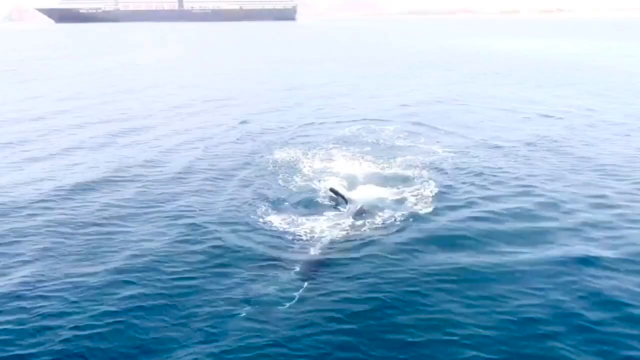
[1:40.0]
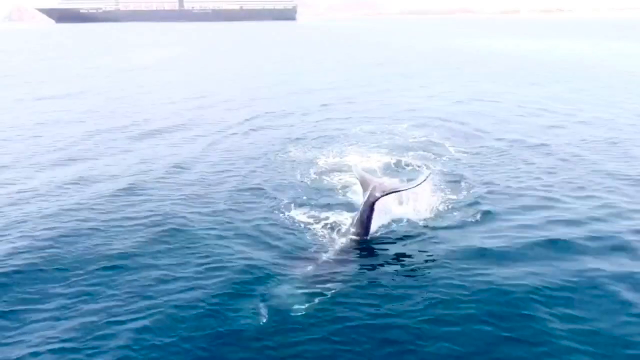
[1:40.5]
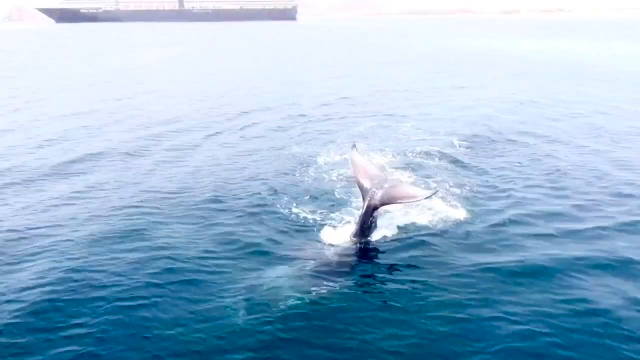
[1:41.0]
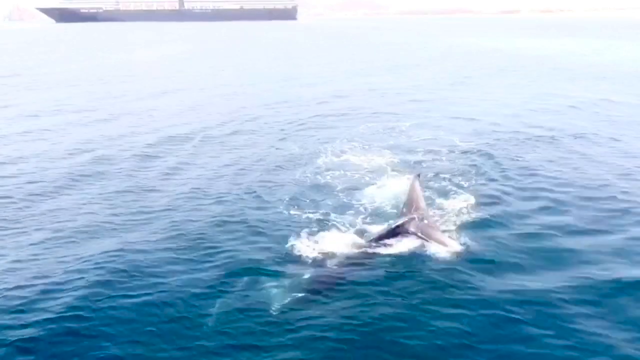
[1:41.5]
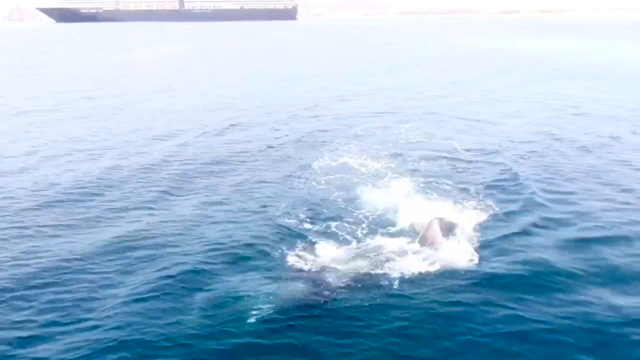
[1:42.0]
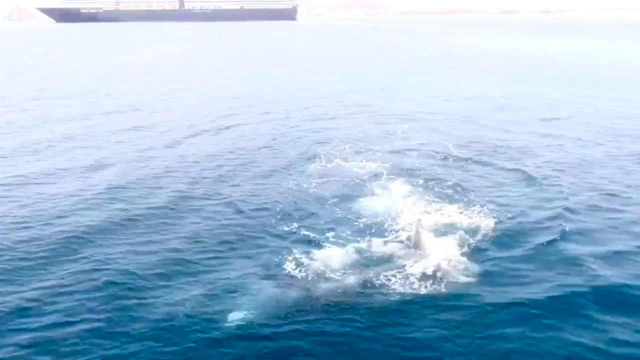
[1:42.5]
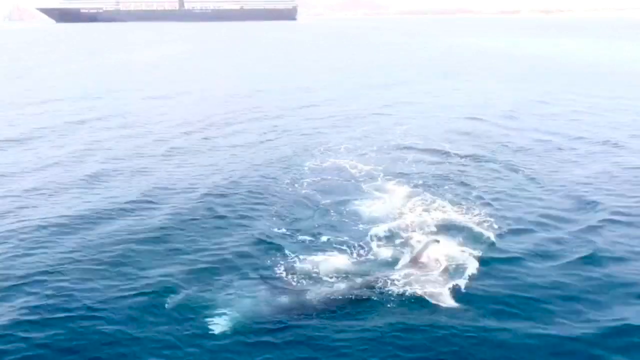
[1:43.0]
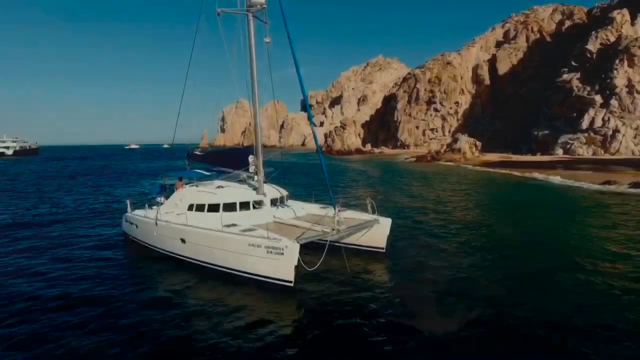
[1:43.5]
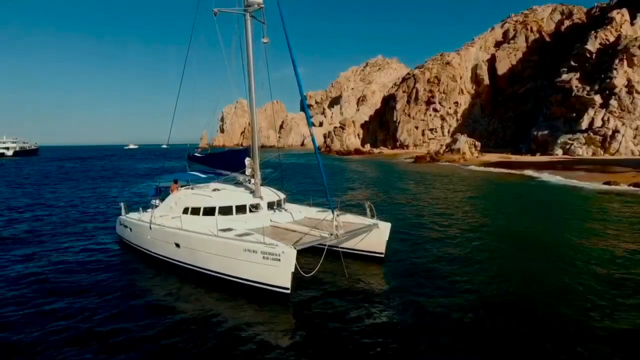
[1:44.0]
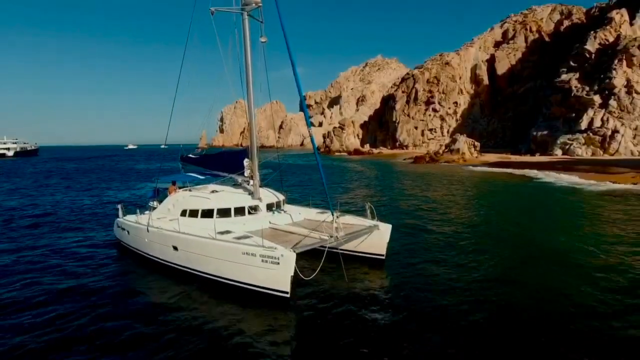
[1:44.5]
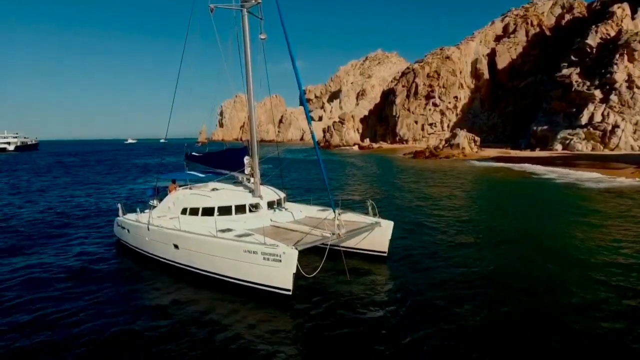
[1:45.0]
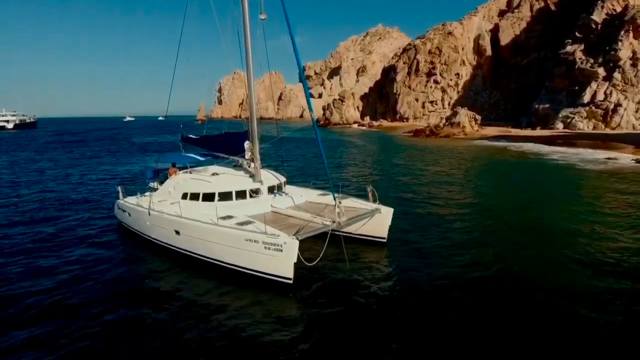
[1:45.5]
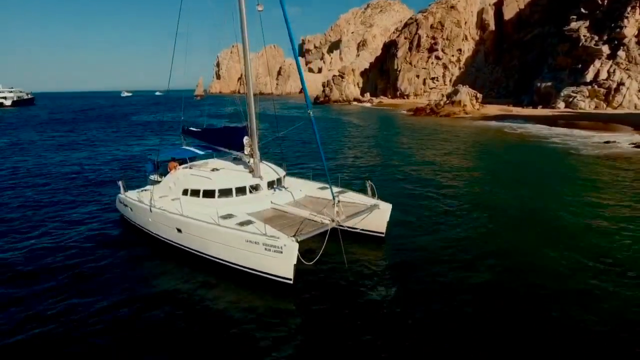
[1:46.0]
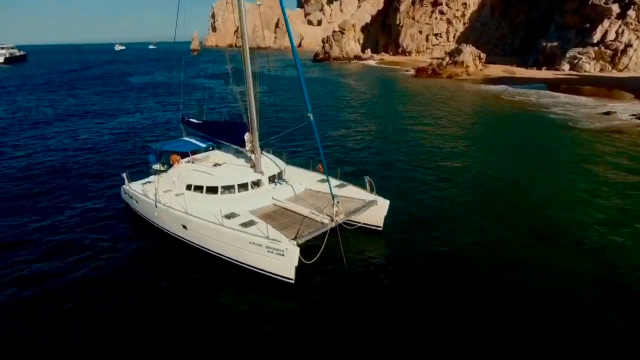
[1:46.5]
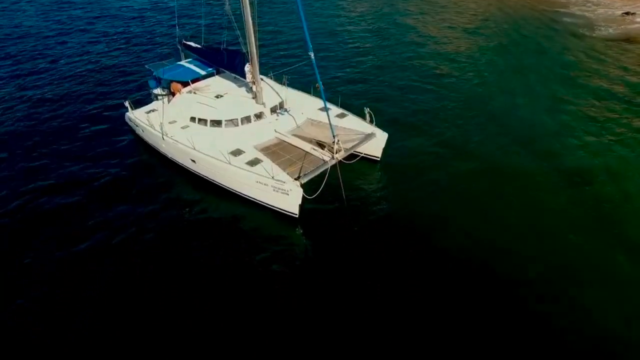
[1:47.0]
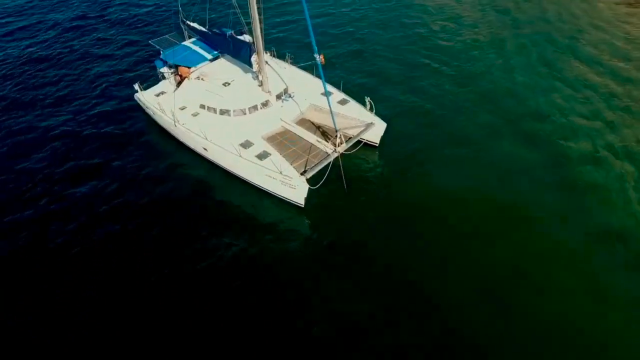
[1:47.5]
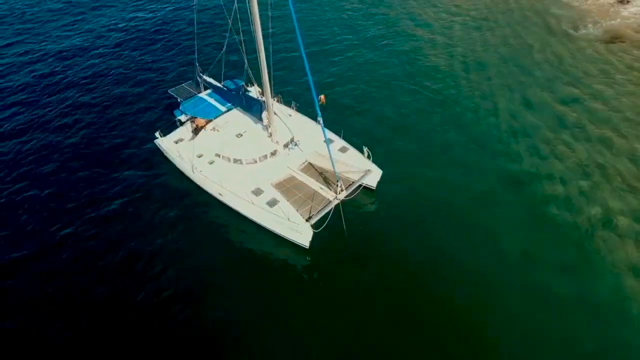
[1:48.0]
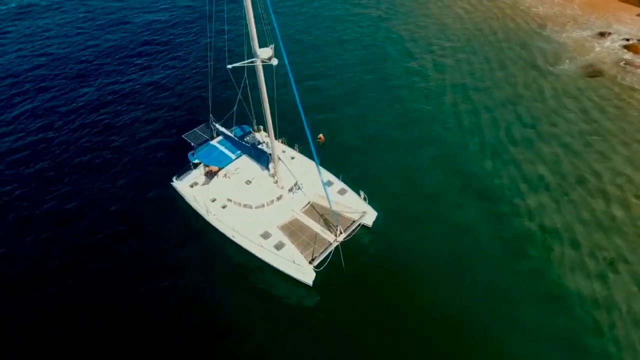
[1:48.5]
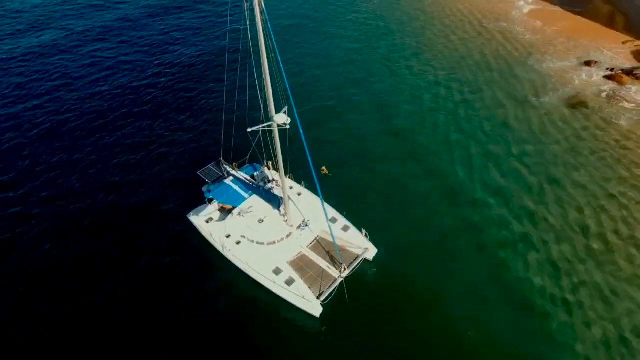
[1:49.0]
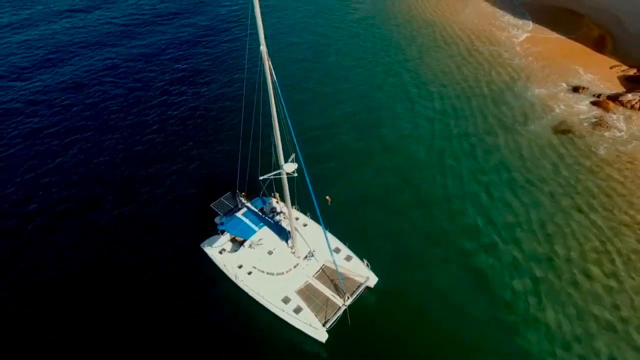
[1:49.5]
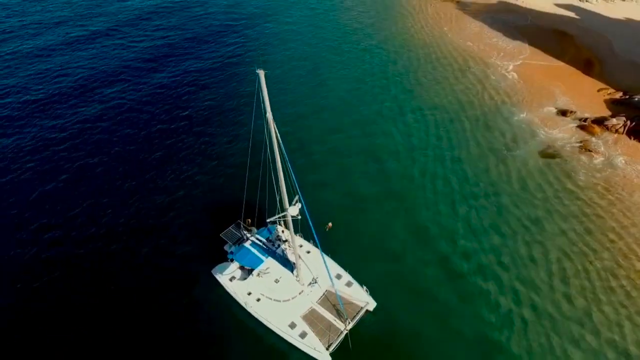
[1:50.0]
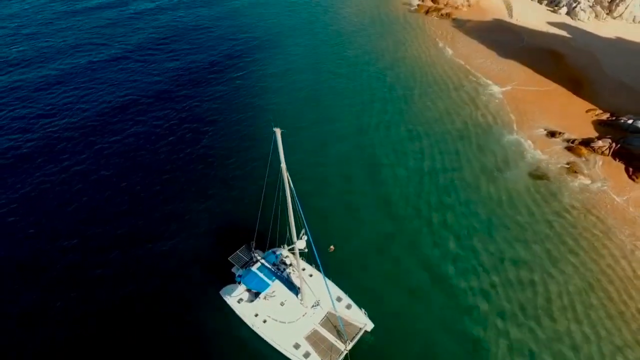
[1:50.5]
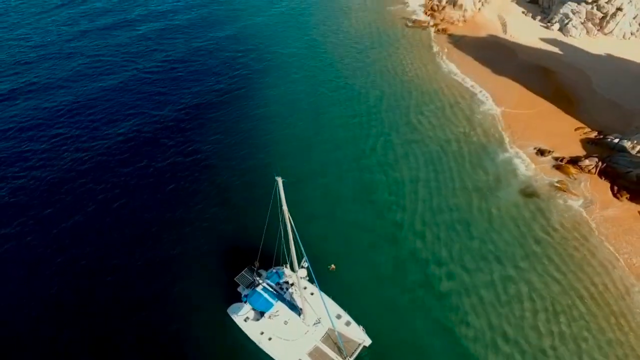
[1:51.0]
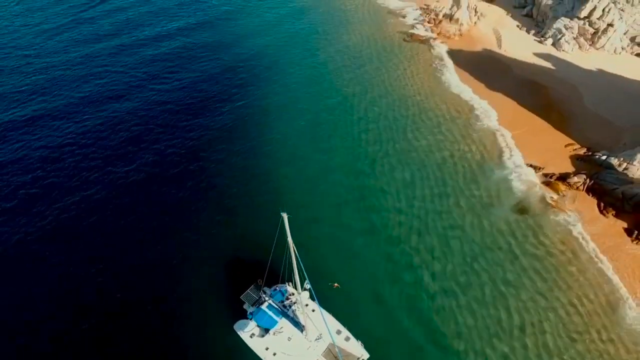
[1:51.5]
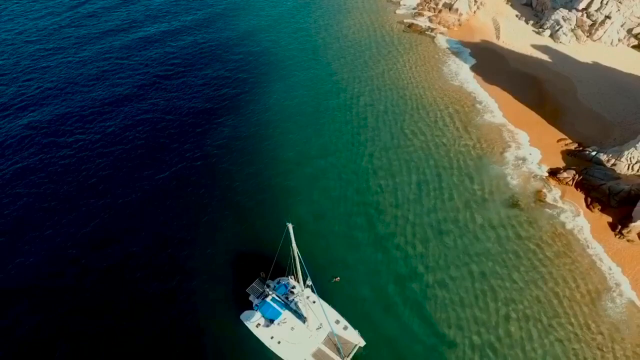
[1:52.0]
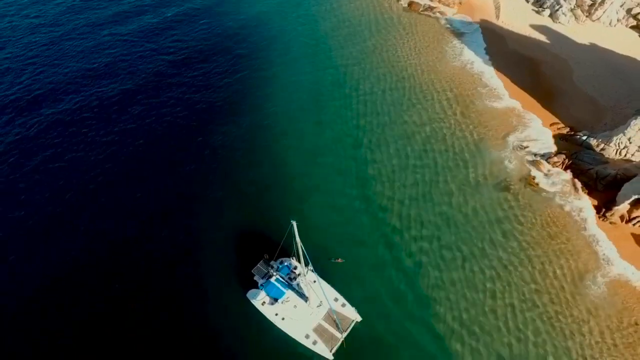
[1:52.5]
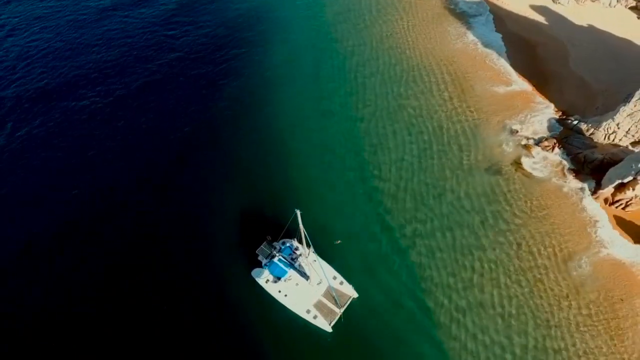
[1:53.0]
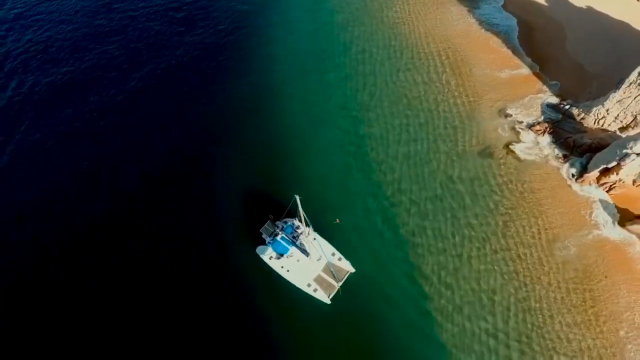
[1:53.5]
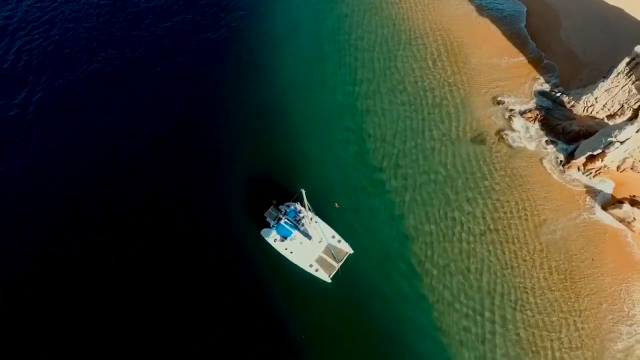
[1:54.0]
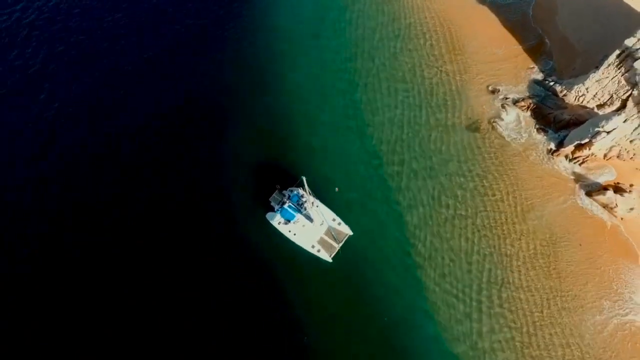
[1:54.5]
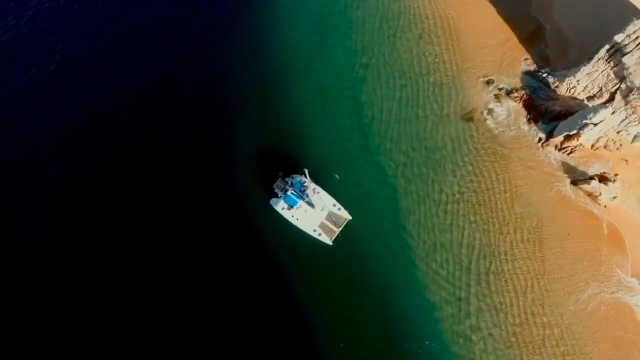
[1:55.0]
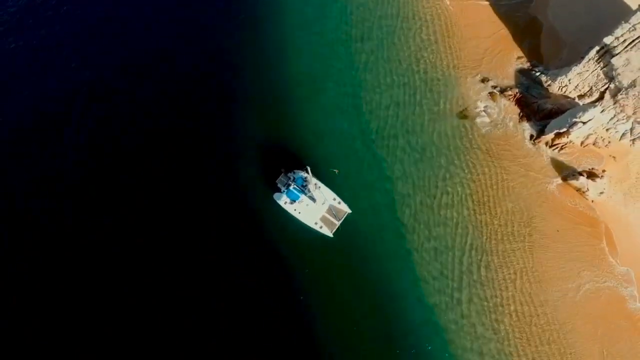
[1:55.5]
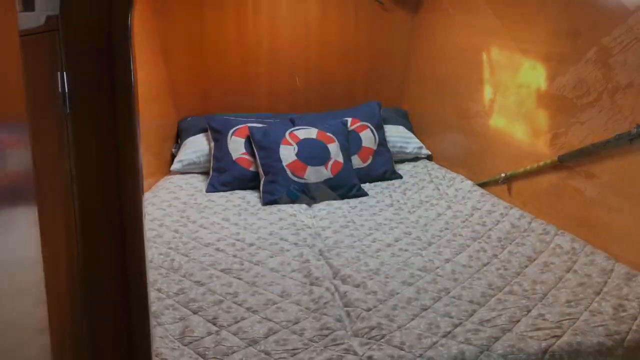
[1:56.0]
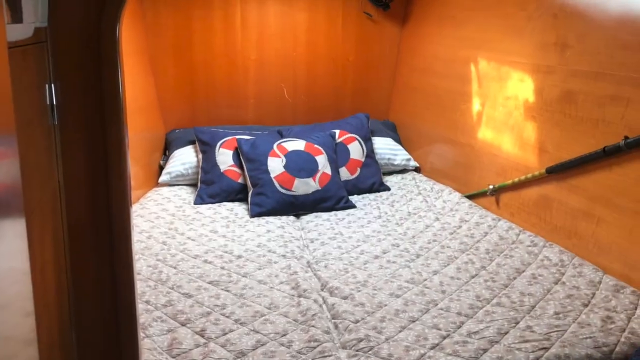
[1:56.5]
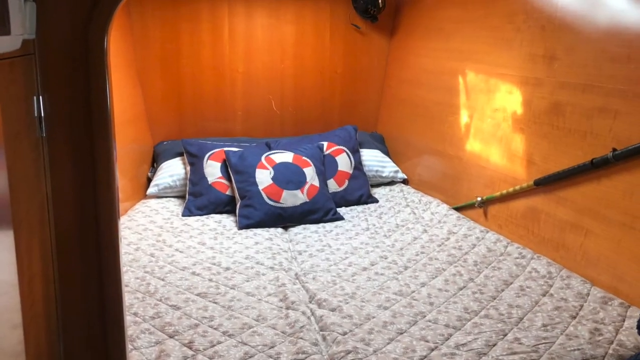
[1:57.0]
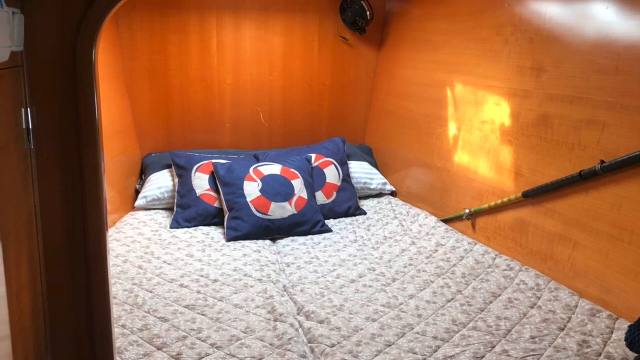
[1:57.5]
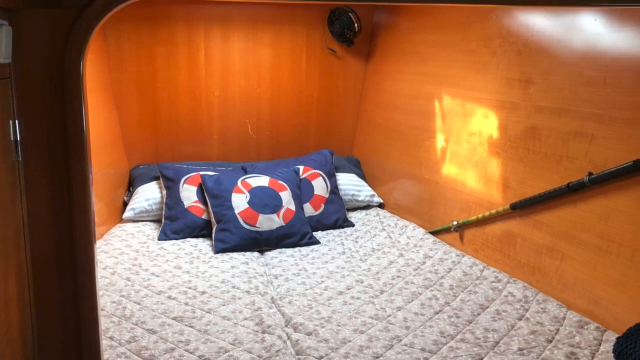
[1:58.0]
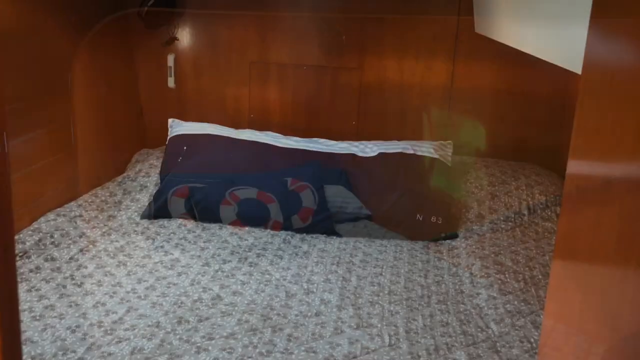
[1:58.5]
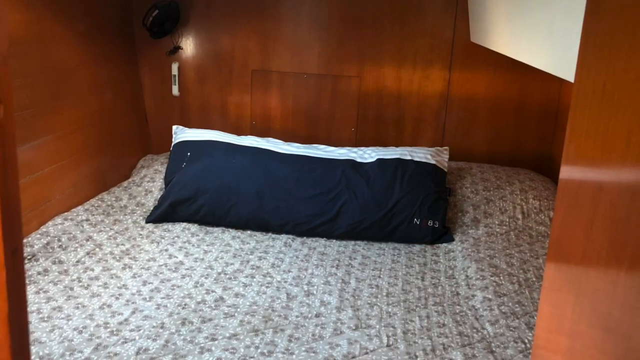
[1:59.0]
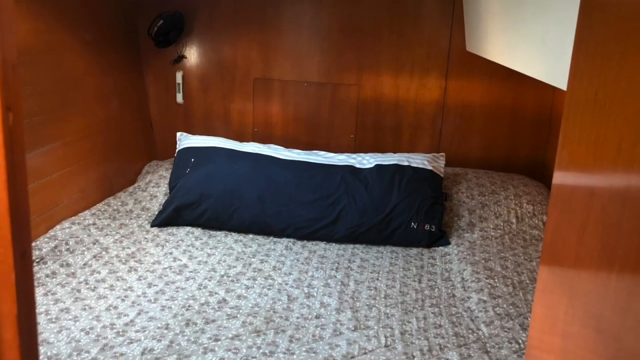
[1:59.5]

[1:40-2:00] Nothing but water is visible as the back of a huge fish sticks out and smacks the water with its fin; it is unclear whether it is a dolphin or a shark, but it is very large. The video cuts to a drone shot with a small white boat in front of the drone and small mountains in the background. The drone flies up and records straight down, showing the boat from above and where the beach meets the water. Next is a shot of one of the cabins in a boat, with light brown walls and a big mattress with a white comforter and three blue pillows, each showing red and white safety rings.